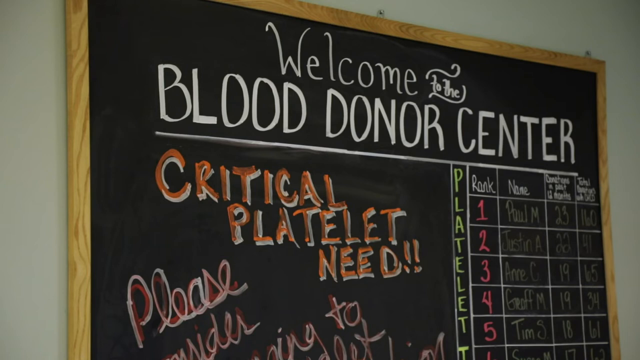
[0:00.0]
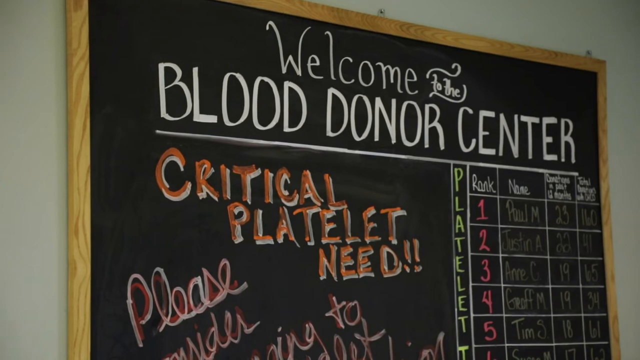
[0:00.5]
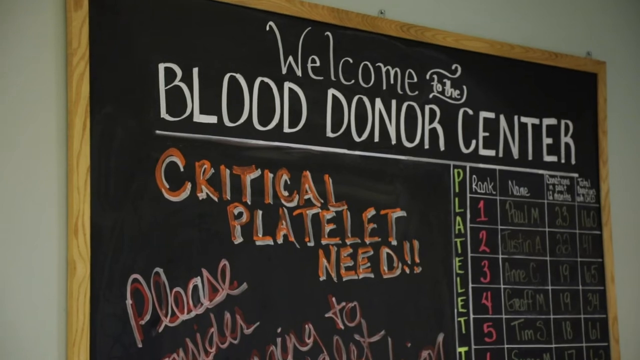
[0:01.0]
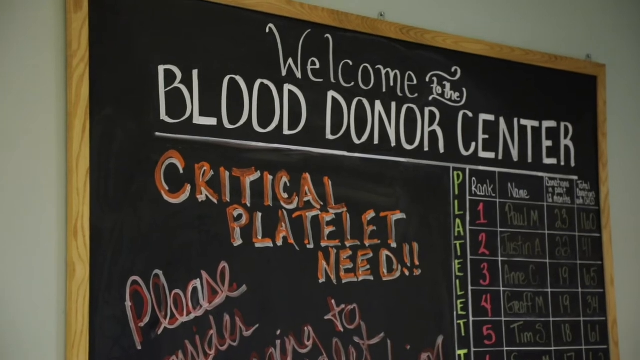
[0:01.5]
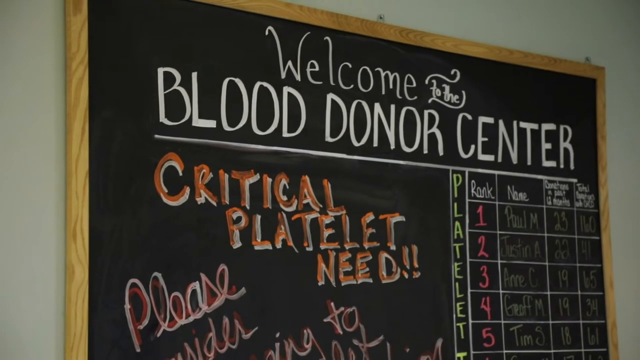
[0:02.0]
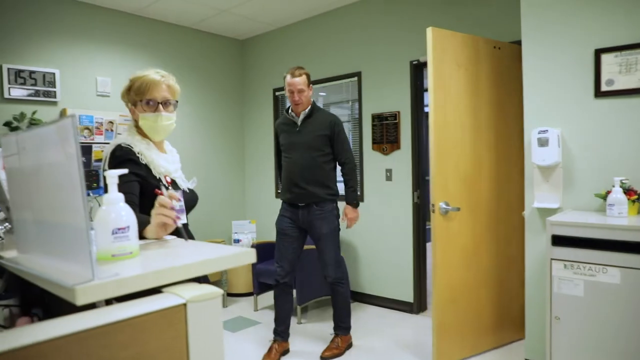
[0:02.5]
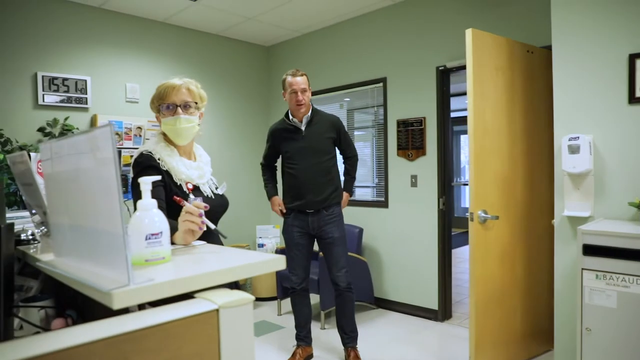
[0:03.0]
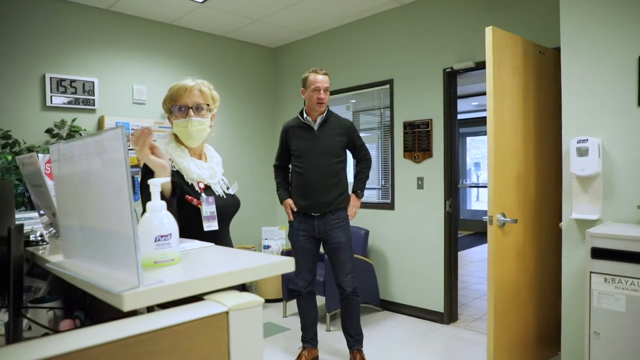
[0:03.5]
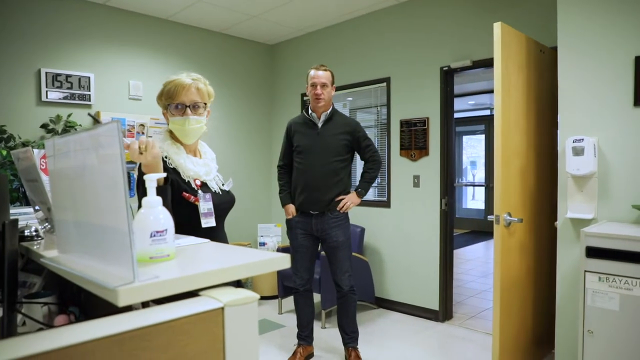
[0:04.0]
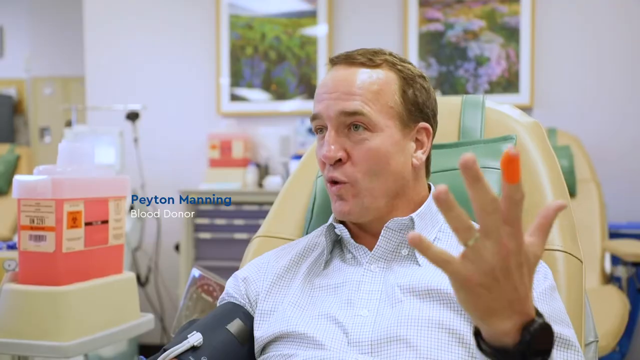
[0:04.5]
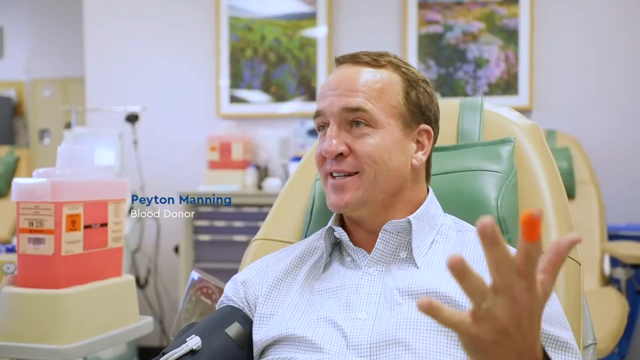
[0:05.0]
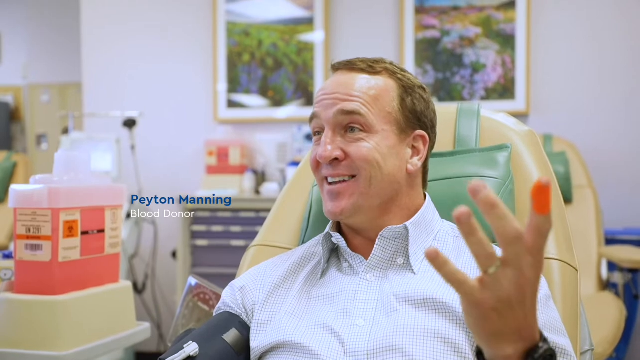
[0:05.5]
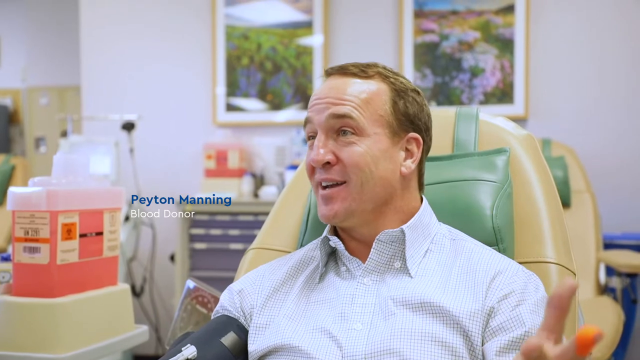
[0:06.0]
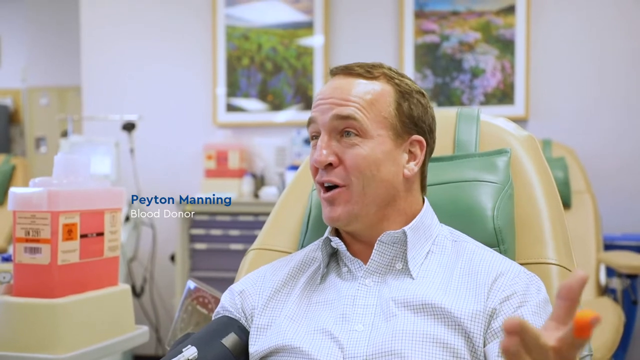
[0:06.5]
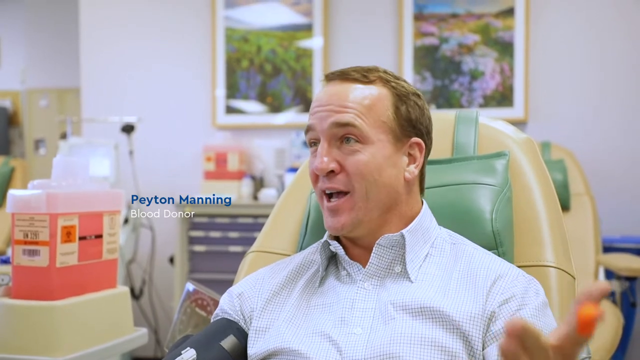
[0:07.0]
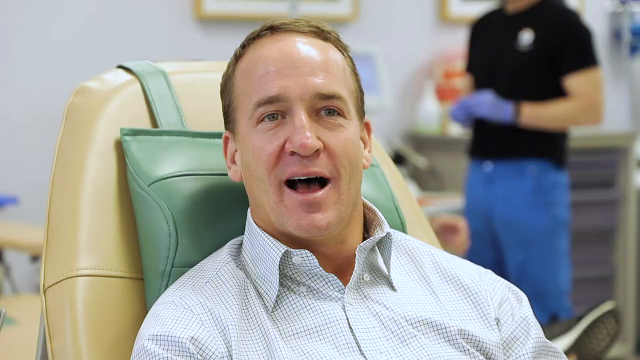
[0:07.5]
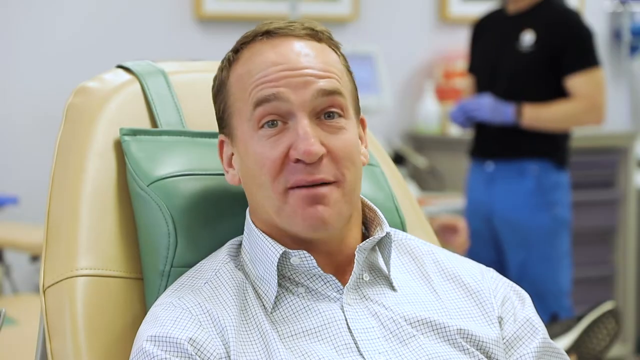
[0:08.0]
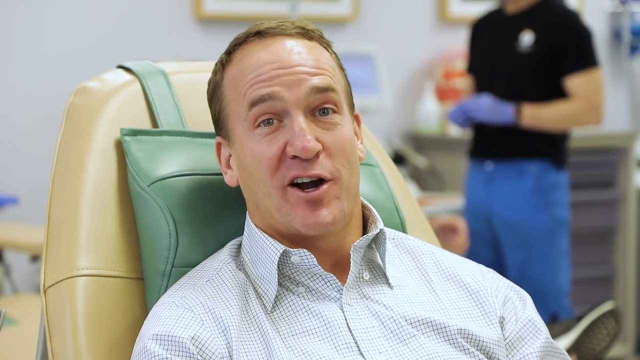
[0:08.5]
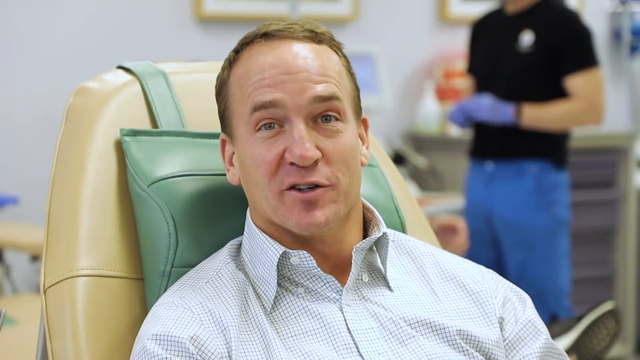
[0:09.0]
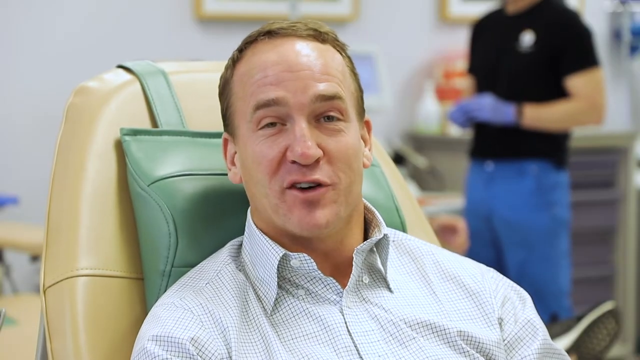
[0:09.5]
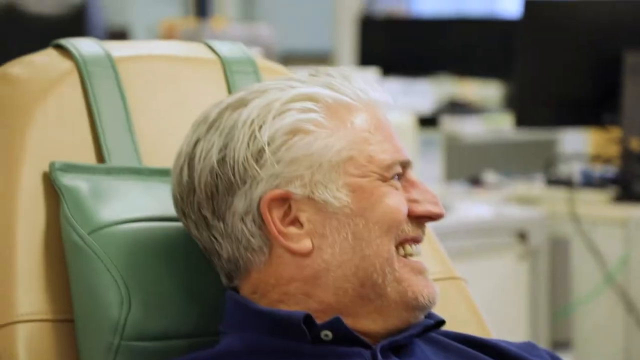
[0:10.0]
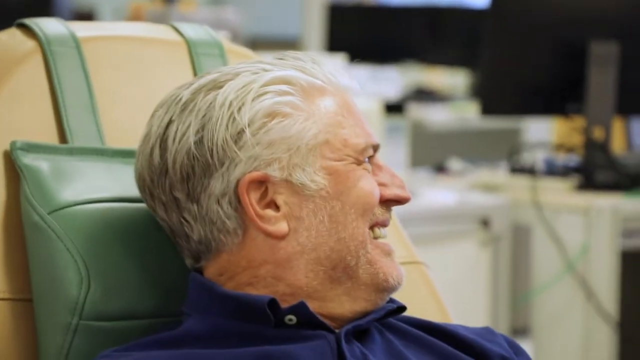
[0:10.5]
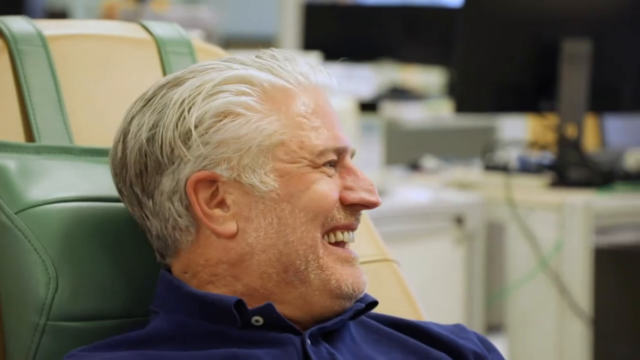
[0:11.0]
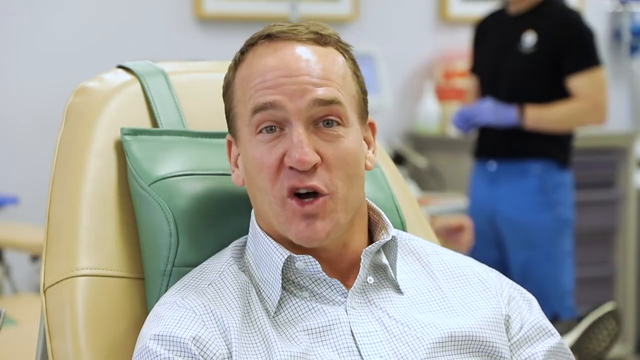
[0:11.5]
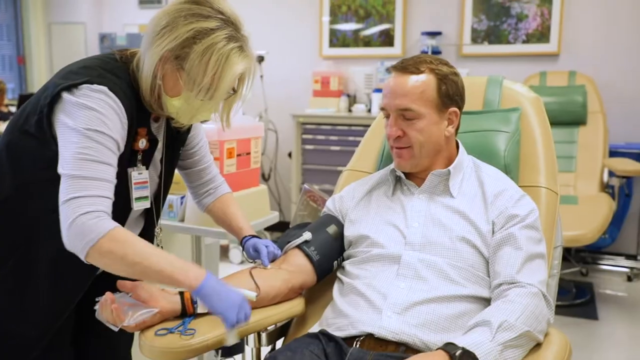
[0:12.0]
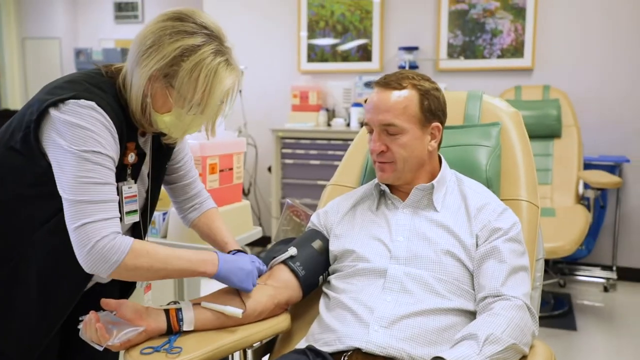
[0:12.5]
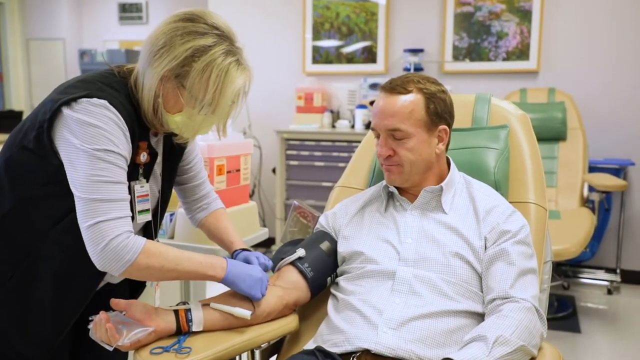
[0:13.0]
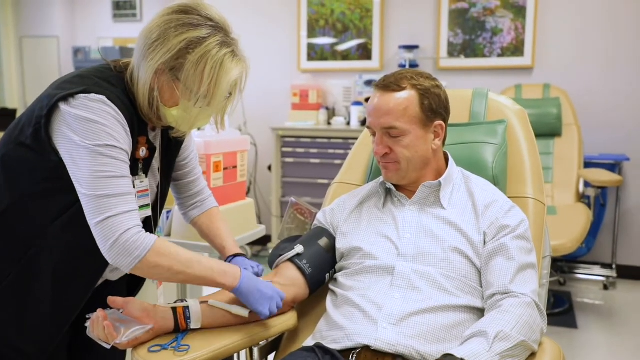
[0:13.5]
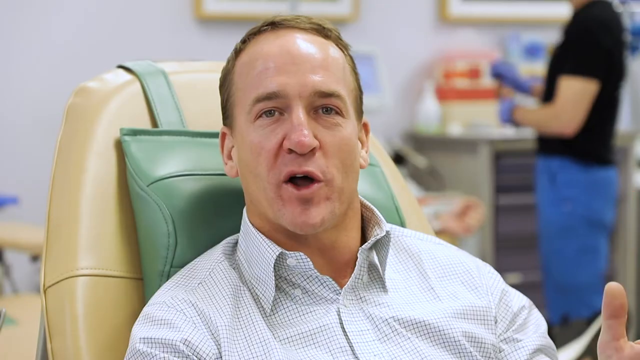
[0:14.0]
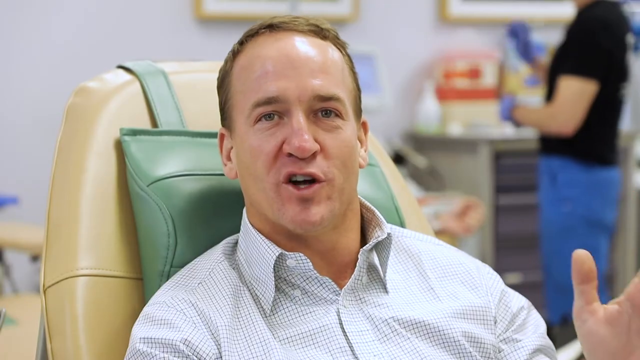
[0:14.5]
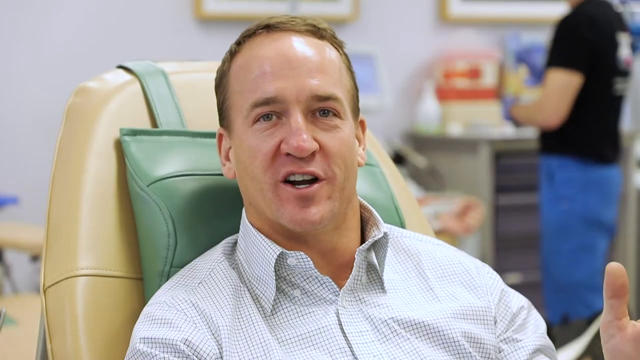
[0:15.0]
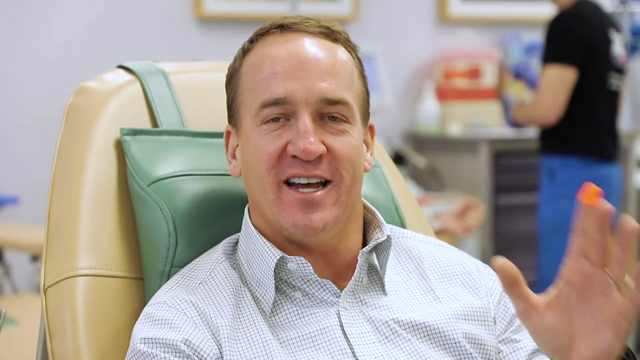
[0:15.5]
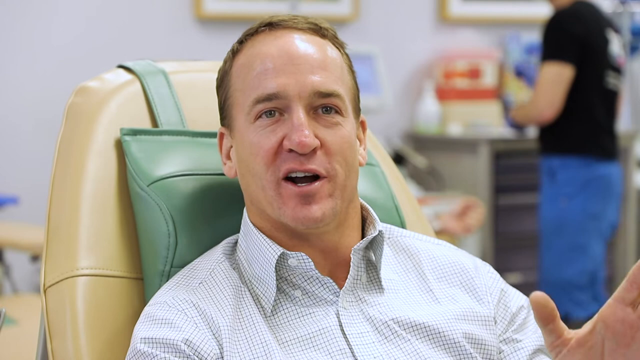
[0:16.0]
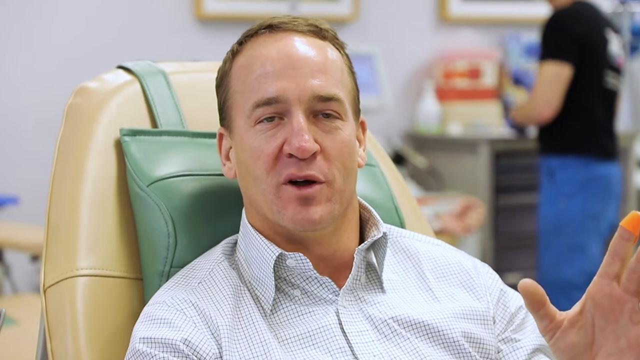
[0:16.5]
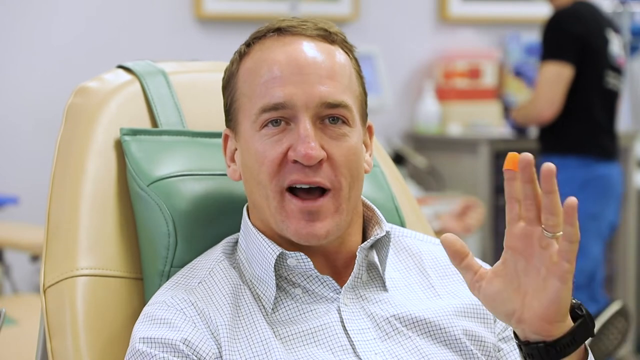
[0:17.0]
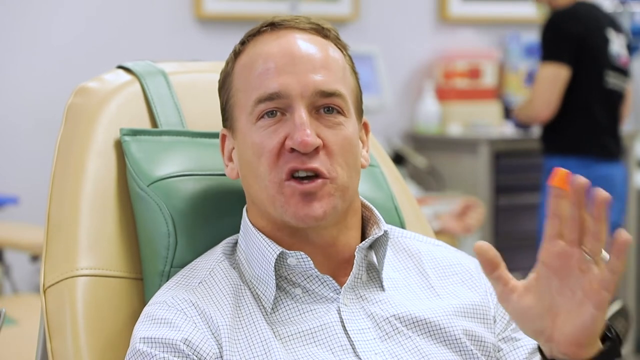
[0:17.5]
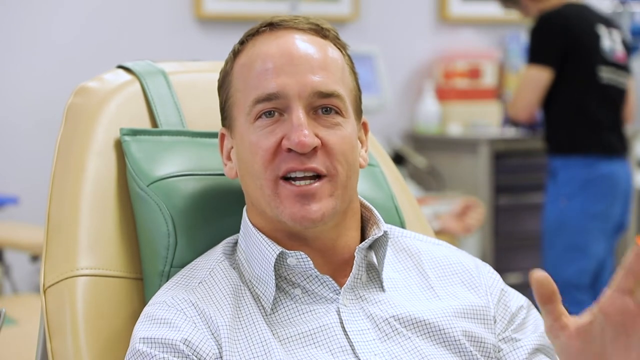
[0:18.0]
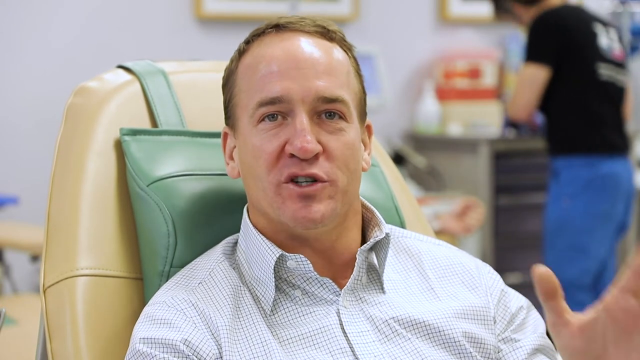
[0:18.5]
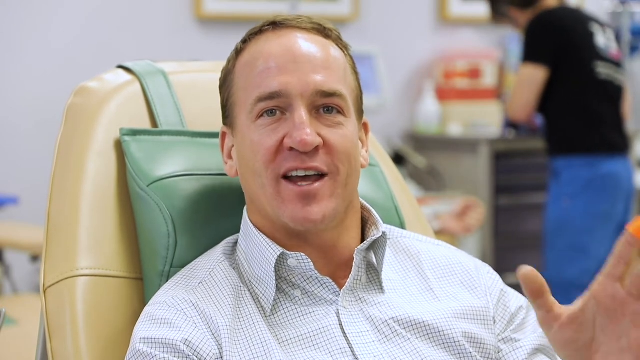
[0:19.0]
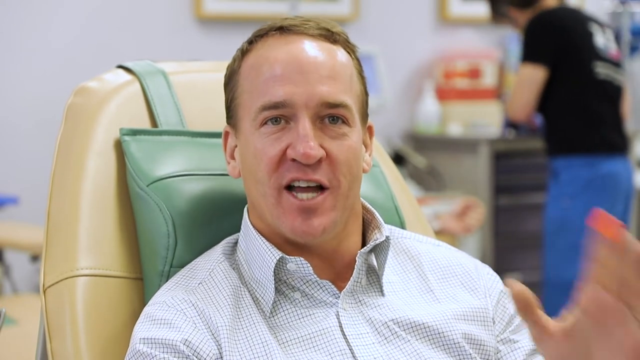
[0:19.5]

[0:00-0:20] A blackboard is set up with white text at the top reading "welcome to the blood donor center." Below and to the left, sort of orange and white writing reads "critical platelet needed," and below that, in cursive, is "please" followed by more words. A chart in the bottom right is oriented top to bottom; to its left is "platelet," and ranks 1, 2, 3, 4 and 5 are written there. The names listed are Paul M, who has given 23 times in the past year with a total donation of 160; number two, Justin A, 22 times in the past year with a total donation of 41; number three, An C, who has given 19 times with 65 total; and number four, Jeff M, 19 times with 34 total. An older woman is then shown on the left wearing a mask, glasses, sort of a black outfit and a white scarf around her neck, with a name badge in front of her. She holds up a sort of card in her left hand, and the time on the wall behind her is 15:51. A man wearing a black long shirt over a white collared shirt and jeans stands in the center. His picture is then shown close up: he is Peyton Manning, and text below says he is a blood donor. He moves his hand up and down, and in another close-up he talks. Next, an older man with white, graying hair and kind of a scruffy beard is shown smiling and talking.